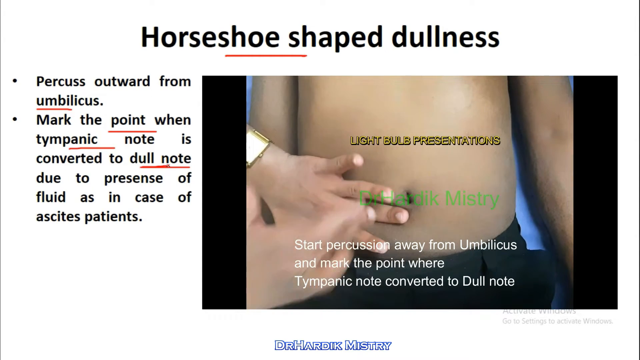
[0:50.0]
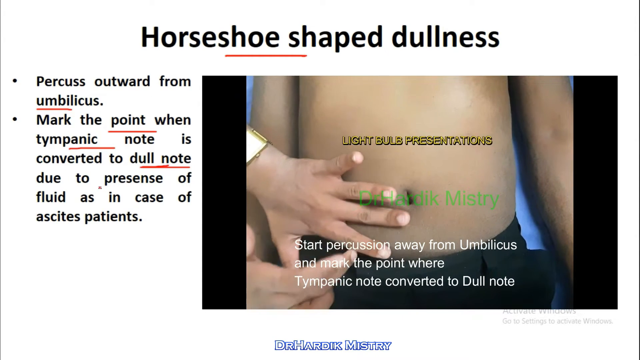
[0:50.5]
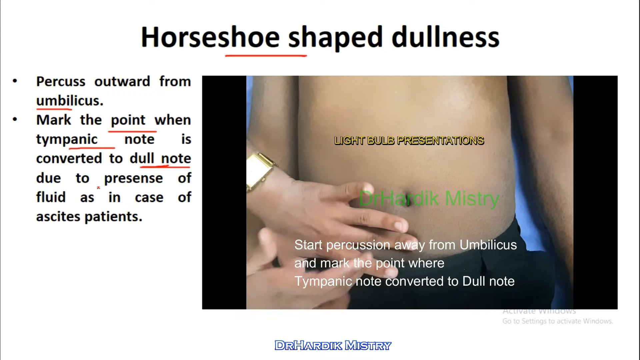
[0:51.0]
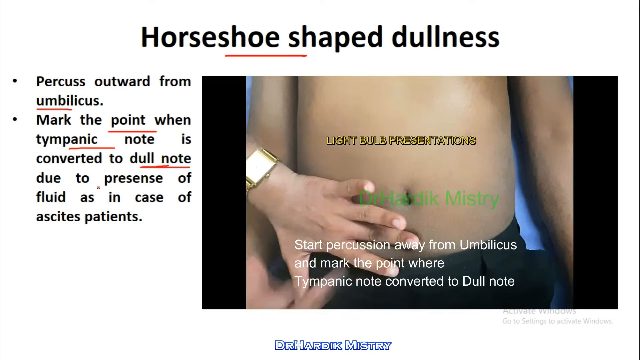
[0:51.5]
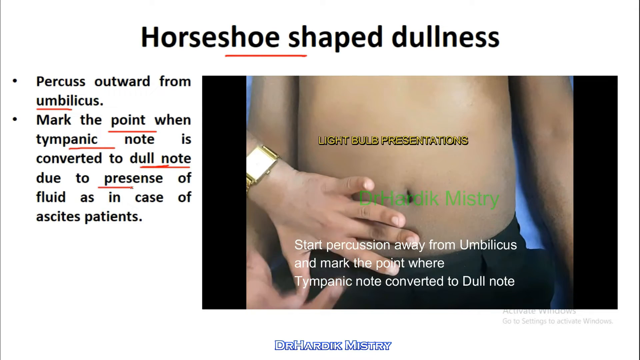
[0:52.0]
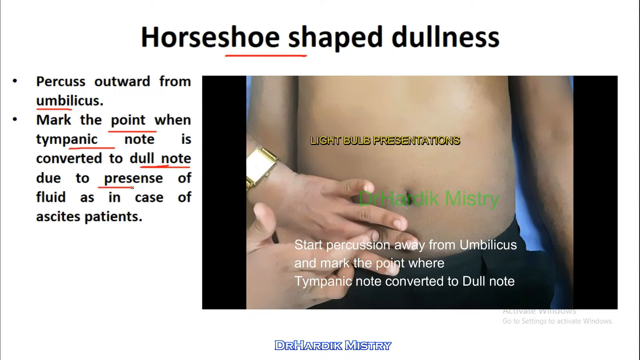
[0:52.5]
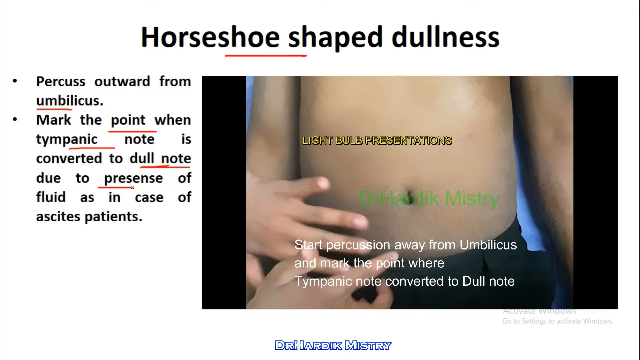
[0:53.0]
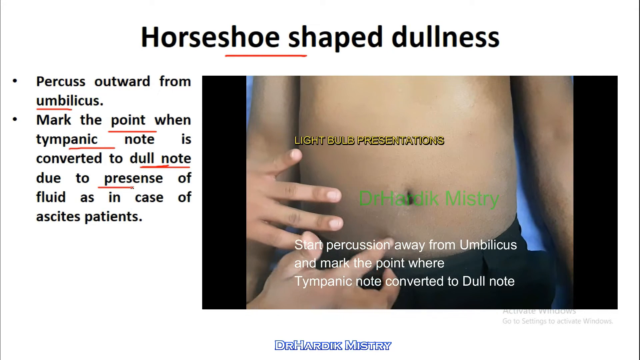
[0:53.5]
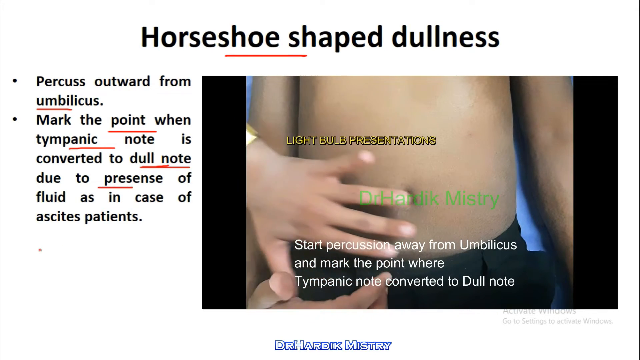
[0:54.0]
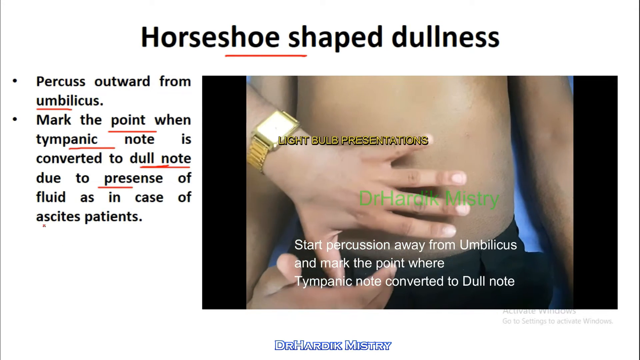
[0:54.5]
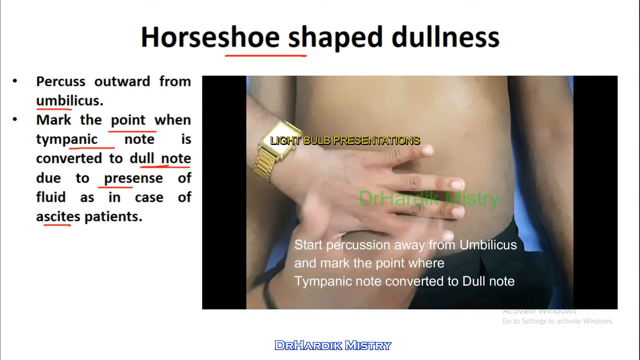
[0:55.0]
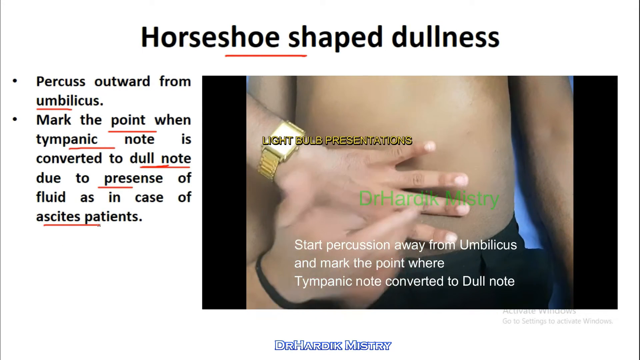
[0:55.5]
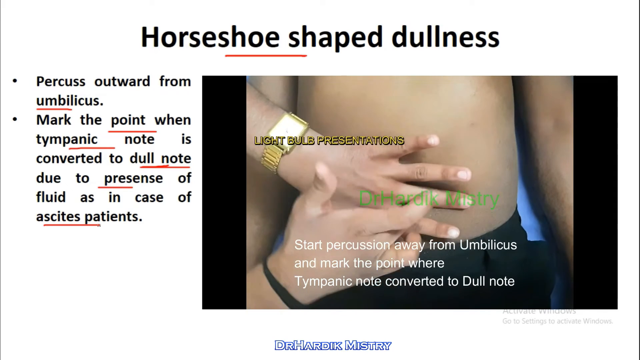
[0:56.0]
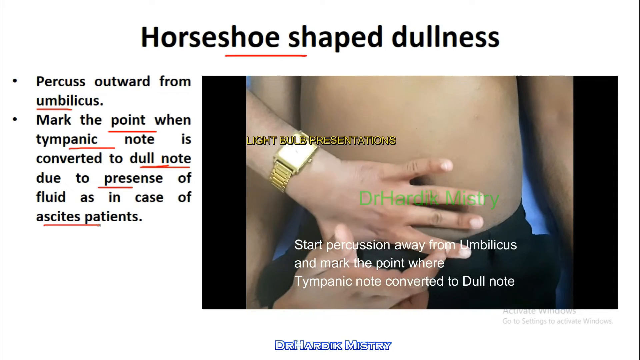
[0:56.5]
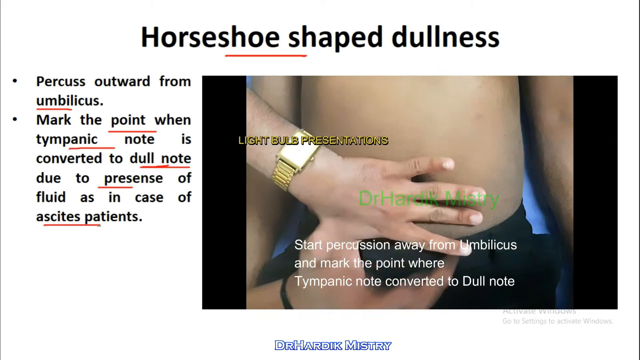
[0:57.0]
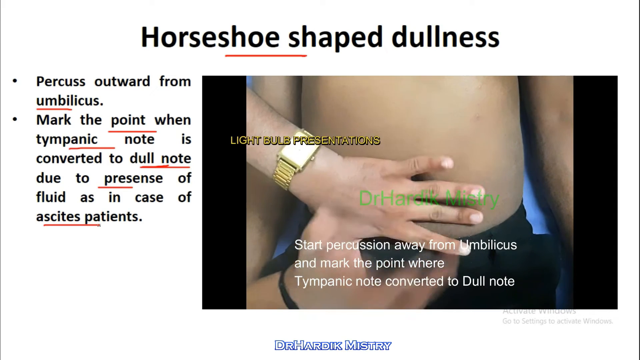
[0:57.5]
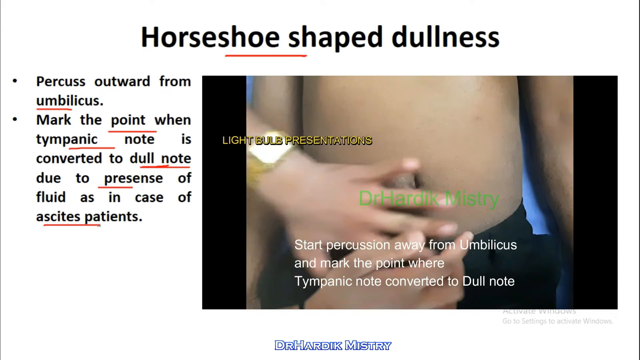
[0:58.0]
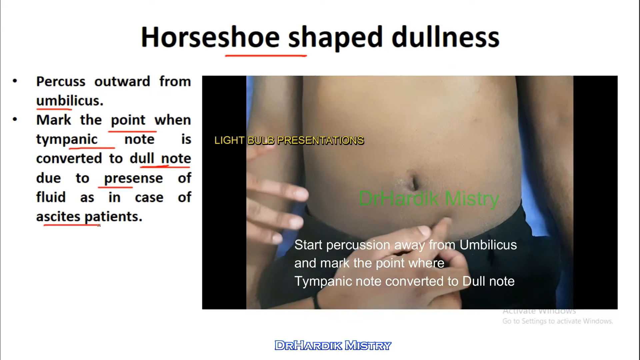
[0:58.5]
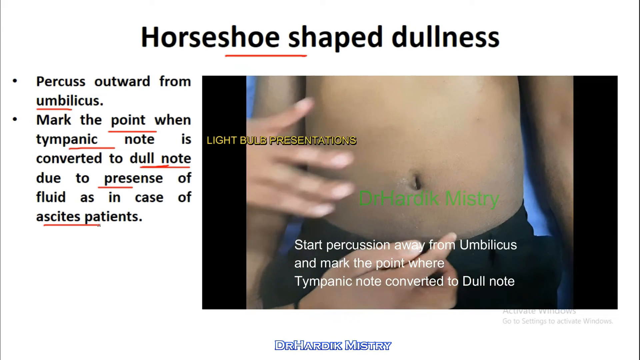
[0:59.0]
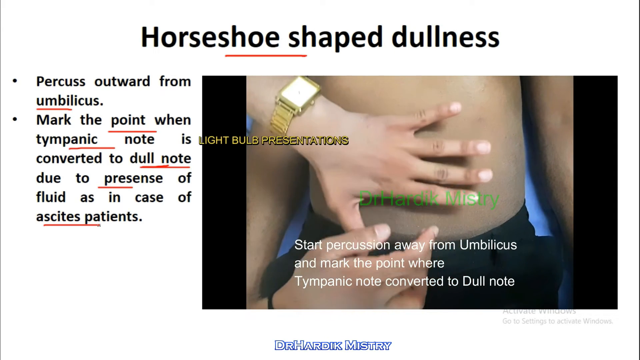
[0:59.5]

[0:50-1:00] At the top of the screen, black letters read "horseshoe-shaped dullness." On the left-hand side are two bullet points: the first reads "percuss outward from umbilicus," and the second reads "mark the point when tympanic note is converted to dull note due to presence of fluid as in the case of ascites patients." An inset on the right-hand side shows an image of a patient's torso; he is lying down. A doctor presses on the patient's stomach with his left hand, taps his left hand with his right hand, then moves his left hand away and points to an image where the sound is changing. Green text across the screen reads "Dr. Hardik Mistry." Below that, white letters read "start percussion away from umbilicus and mark the point where tympanic note converted to dull note."